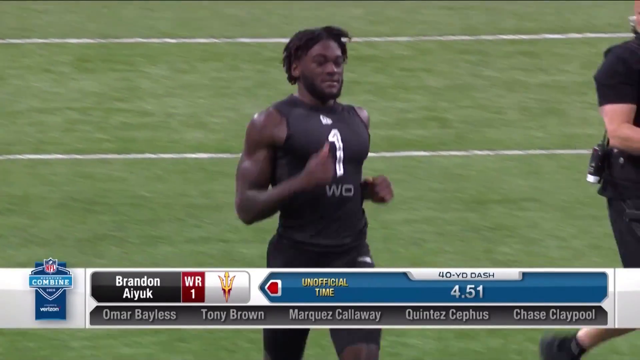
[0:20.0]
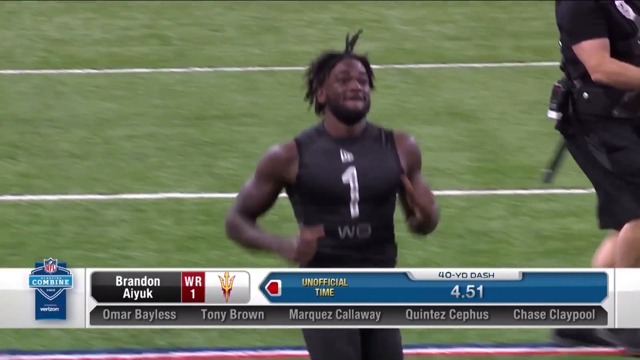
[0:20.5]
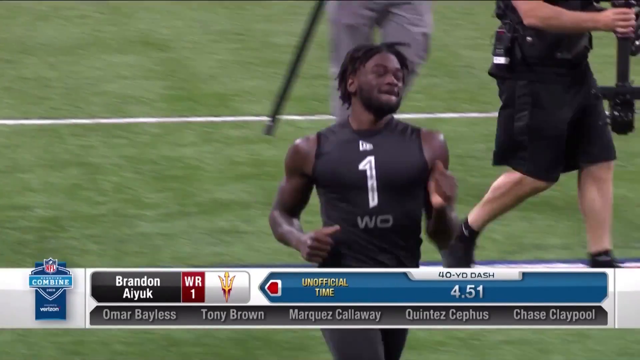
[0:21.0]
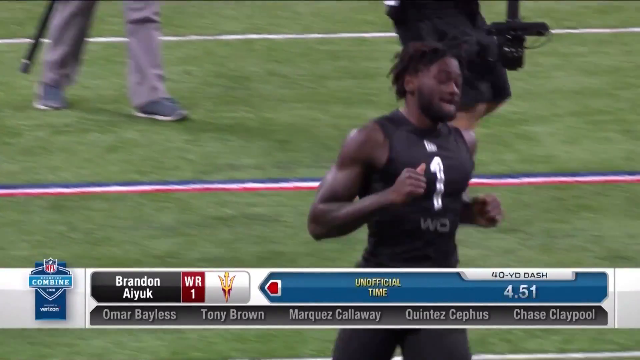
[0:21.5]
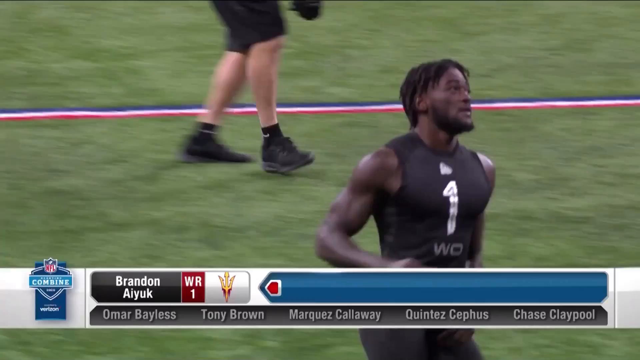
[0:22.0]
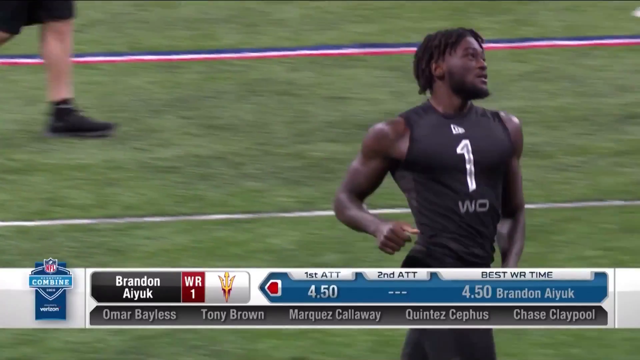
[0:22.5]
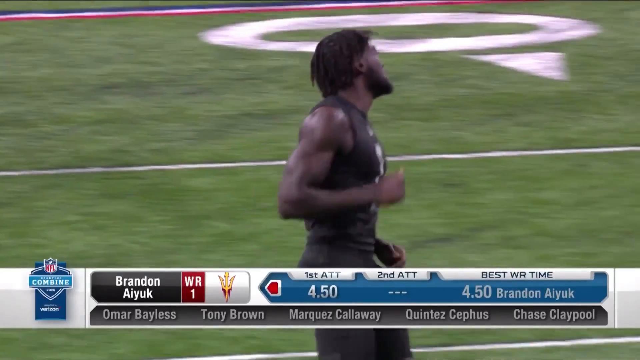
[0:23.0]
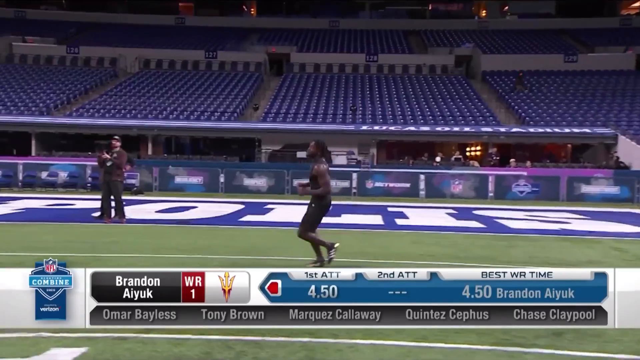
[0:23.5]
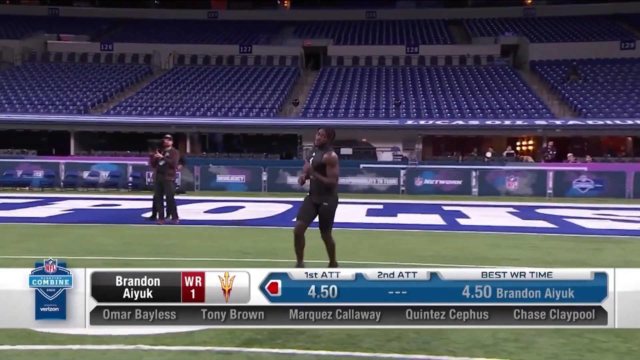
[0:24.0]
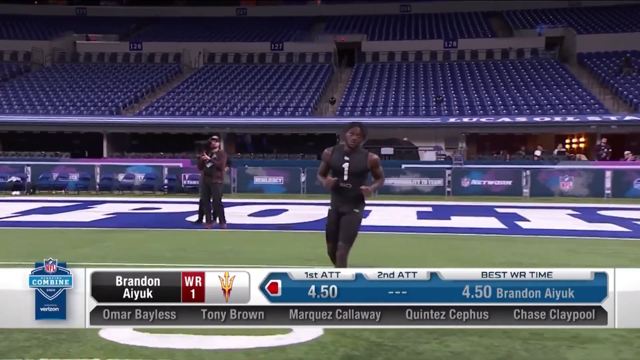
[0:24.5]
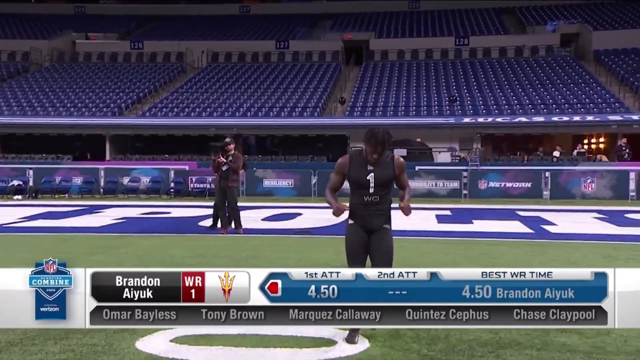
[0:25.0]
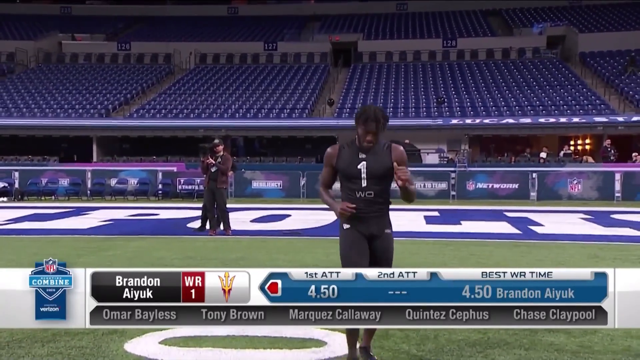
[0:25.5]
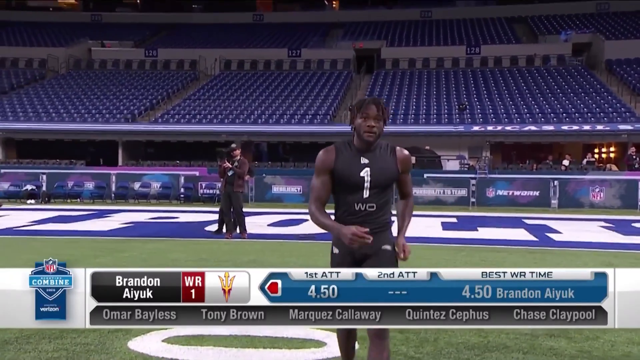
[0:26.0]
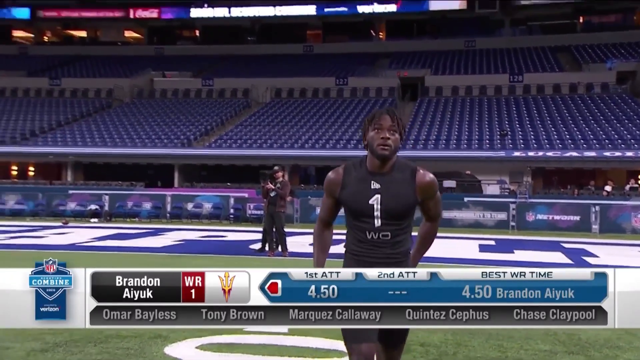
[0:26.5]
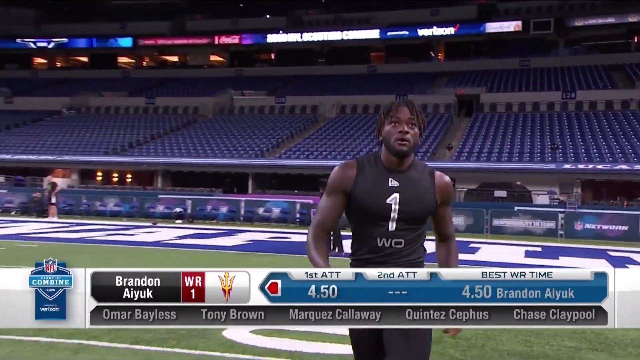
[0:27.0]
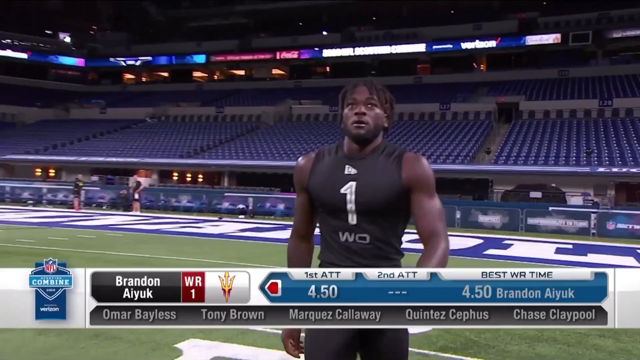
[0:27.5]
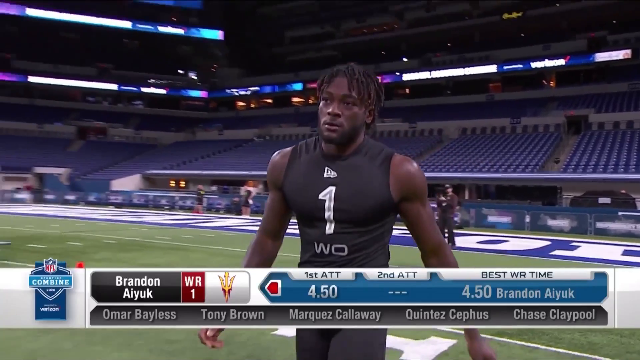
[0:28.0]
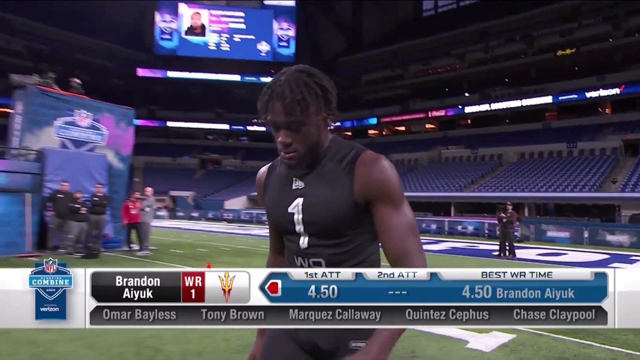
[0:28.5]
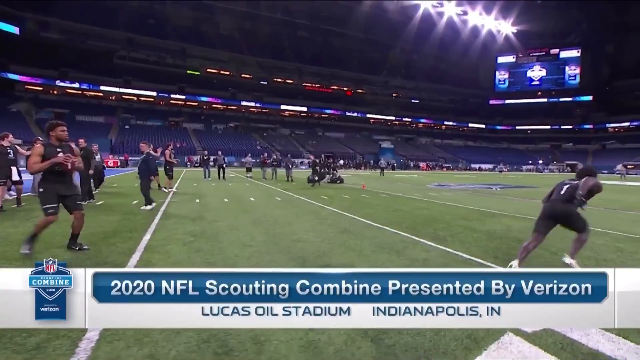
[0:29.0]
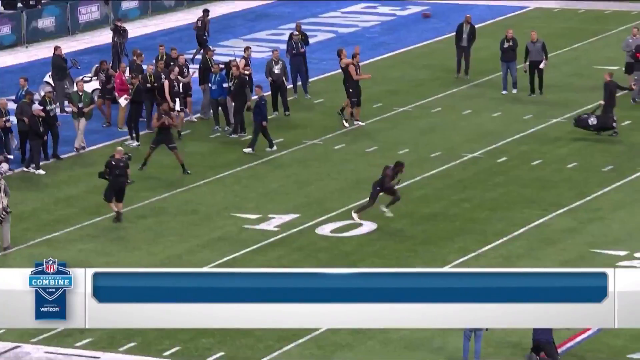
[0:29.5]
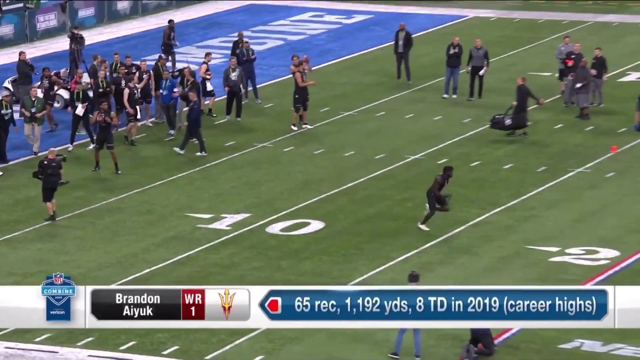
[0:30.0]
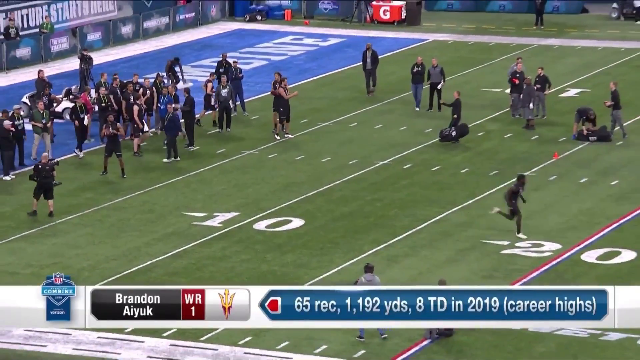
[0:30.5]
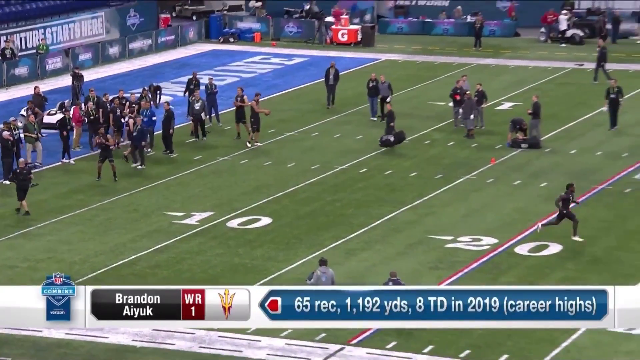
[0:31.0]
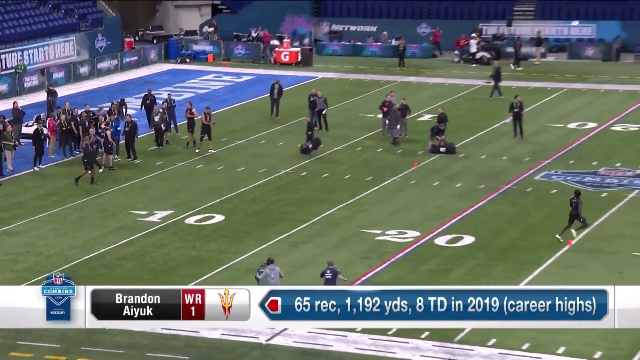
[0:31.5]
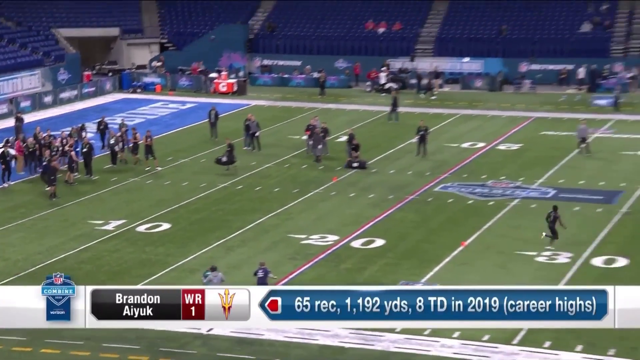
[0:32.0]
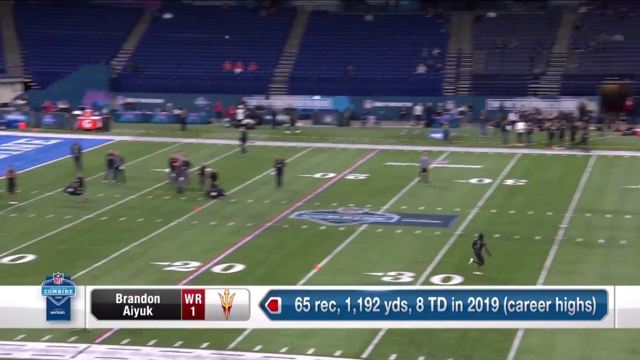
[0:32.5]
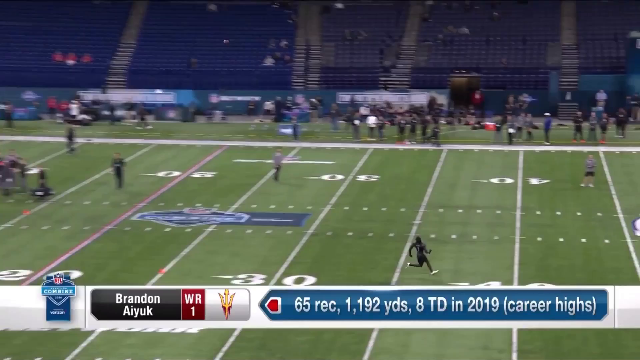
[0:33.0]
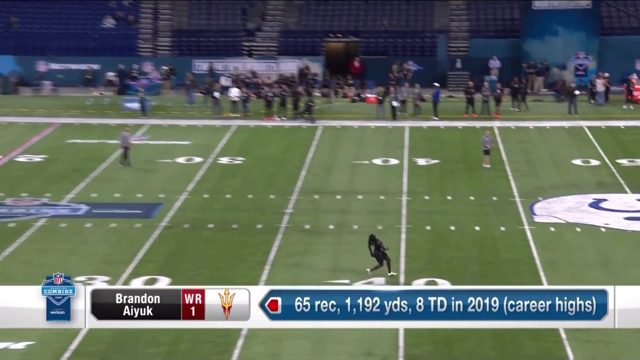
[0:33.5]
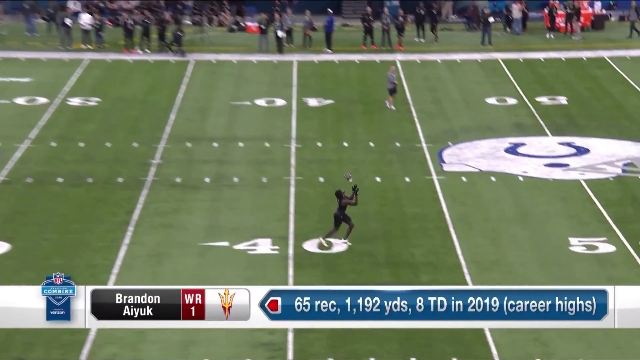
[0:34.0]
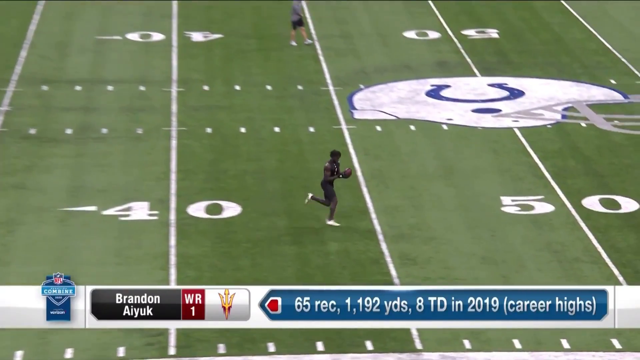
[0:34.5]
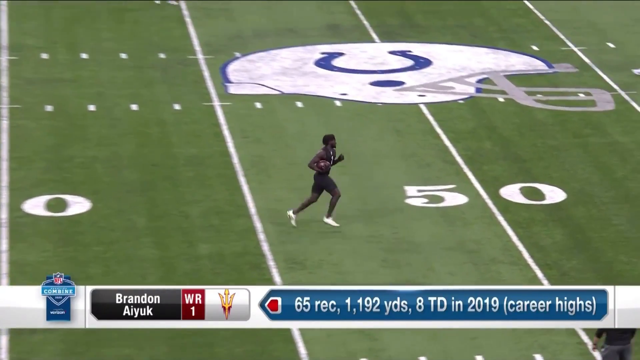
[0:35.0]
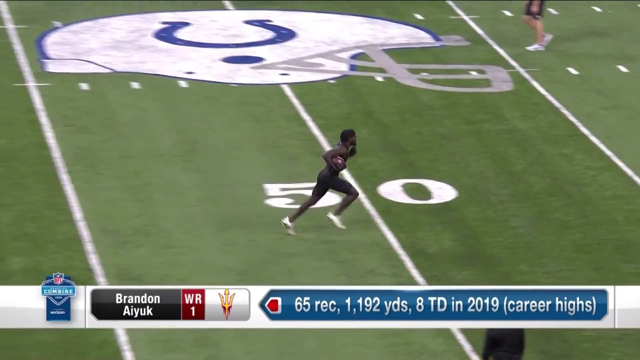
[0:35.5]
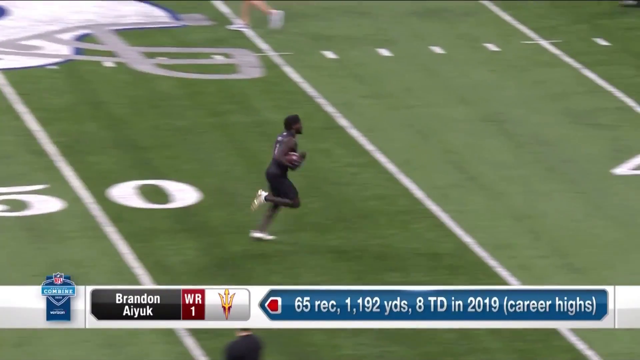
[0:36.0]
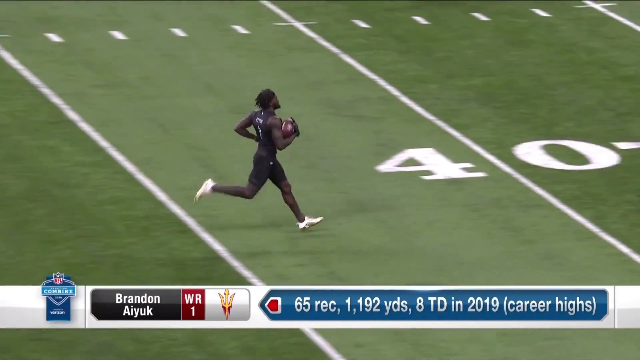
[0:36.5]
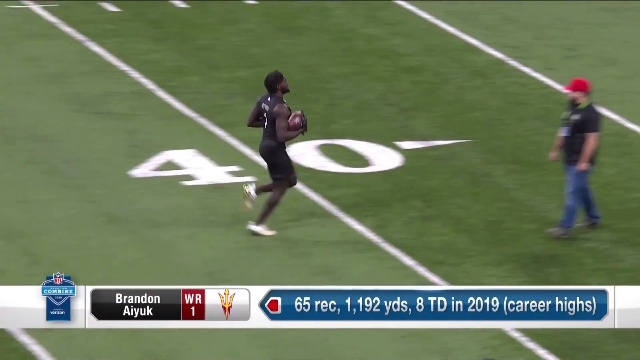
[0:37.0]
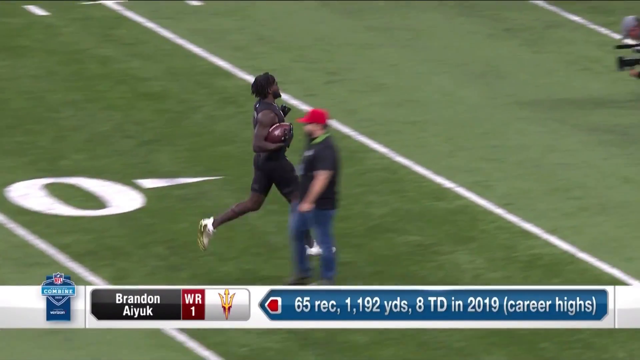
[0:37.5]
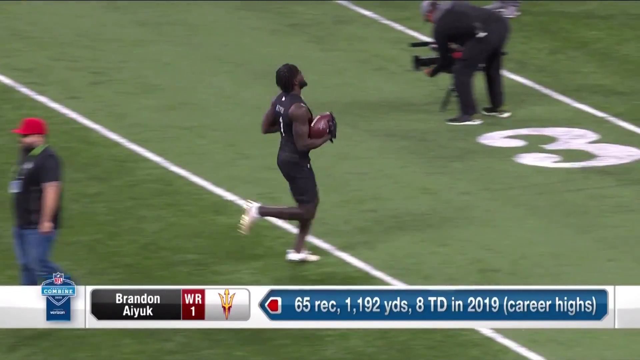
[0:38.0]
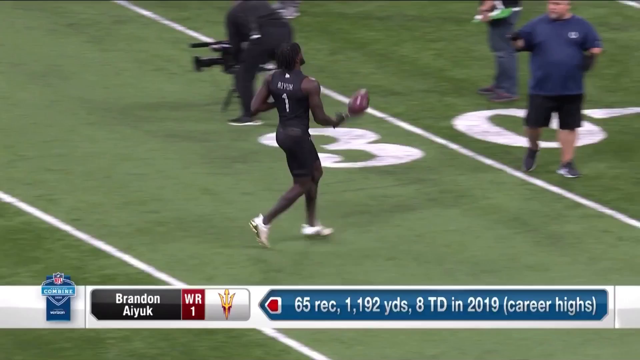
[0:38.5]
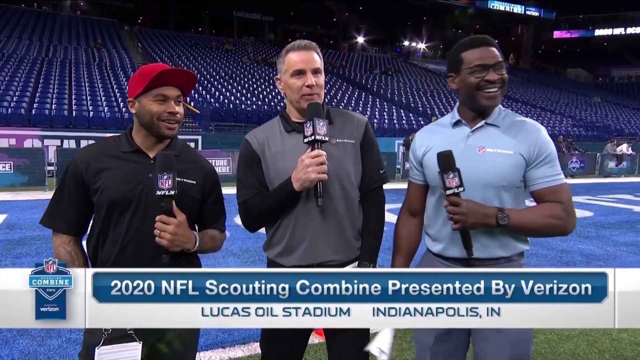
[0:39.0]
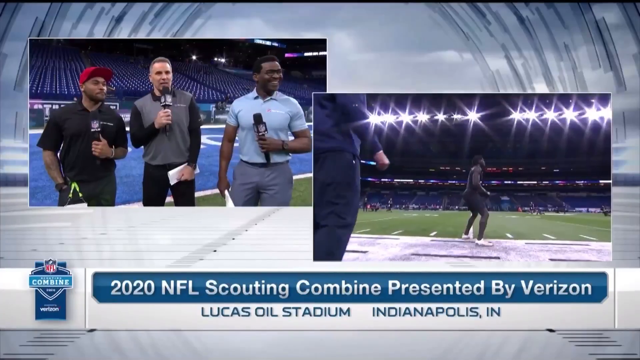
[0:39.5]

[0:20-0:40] A person working out at the NFL combine jogs down the field, his hands and feet moving as he slowly jogs and comes to a stop. As he stops, he slowly turns around and starts walking in the other direction. The video then shows him running up the field from left to right as a football is thrown to him. He looks up over his shoulder, the ball falls right in front of him, and he catches it in his hands, then continues to jog up the field.